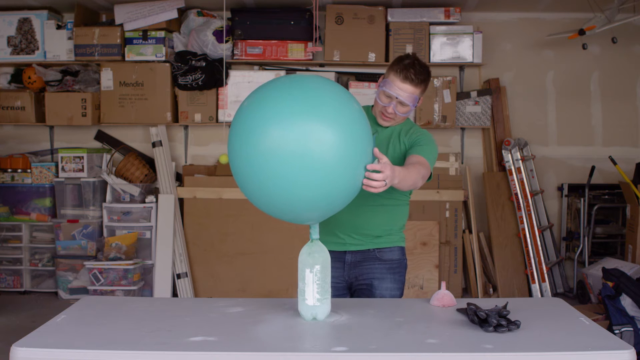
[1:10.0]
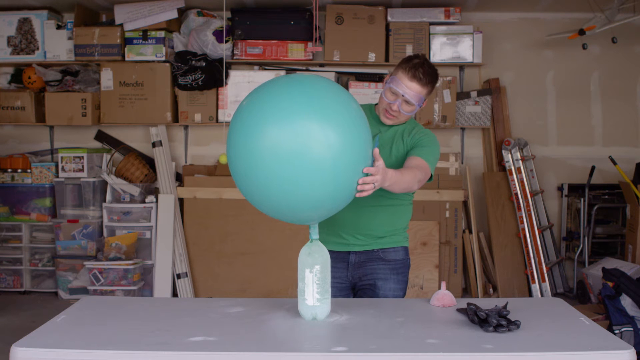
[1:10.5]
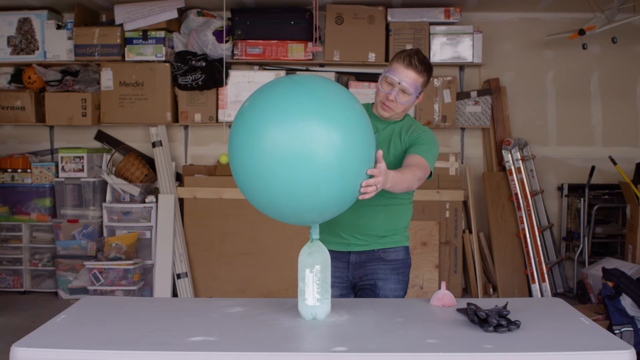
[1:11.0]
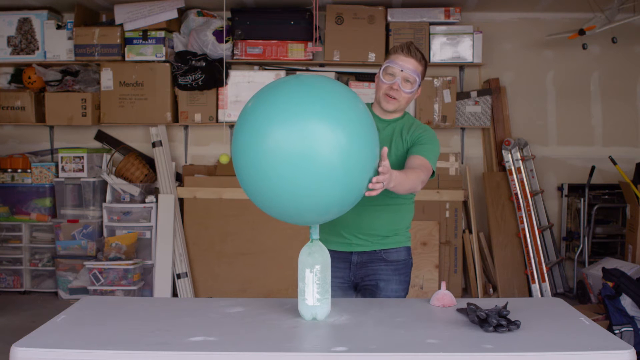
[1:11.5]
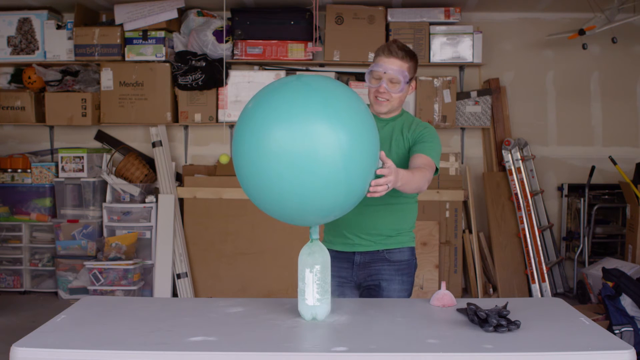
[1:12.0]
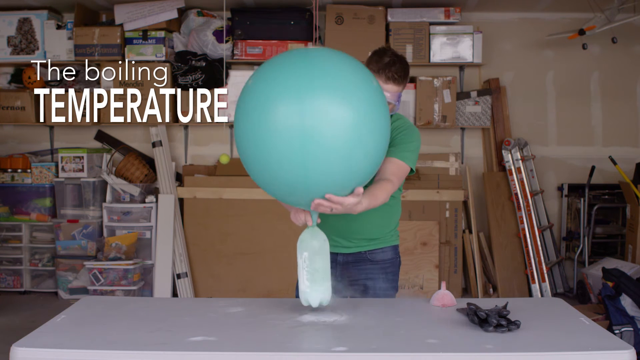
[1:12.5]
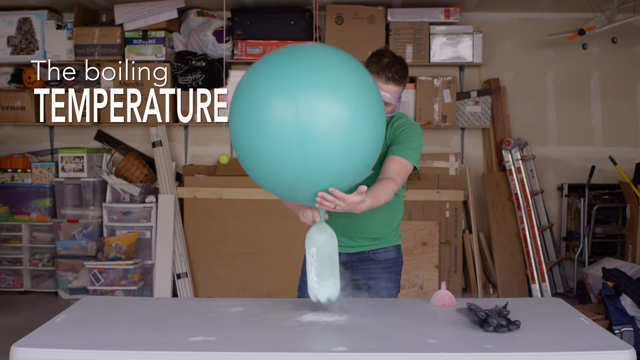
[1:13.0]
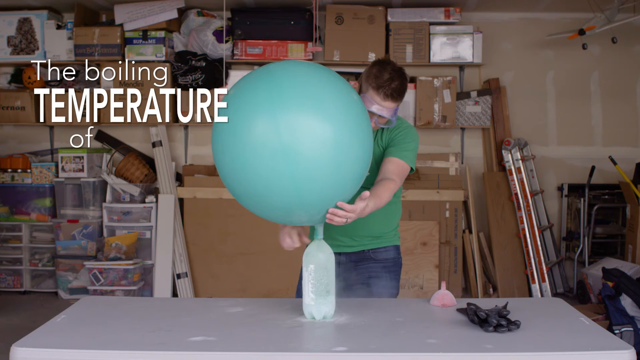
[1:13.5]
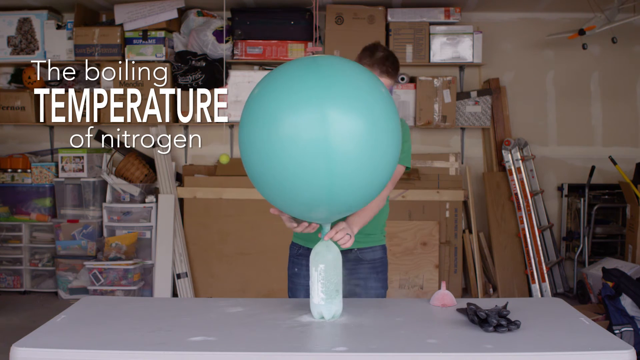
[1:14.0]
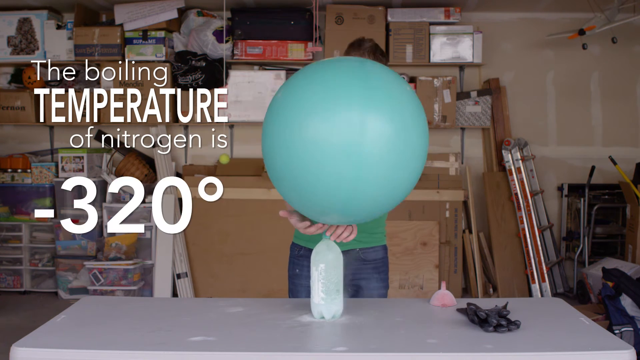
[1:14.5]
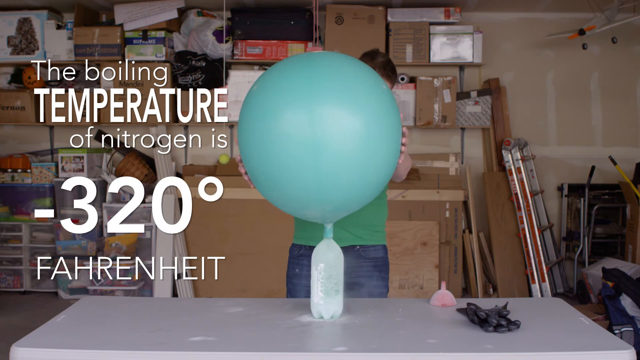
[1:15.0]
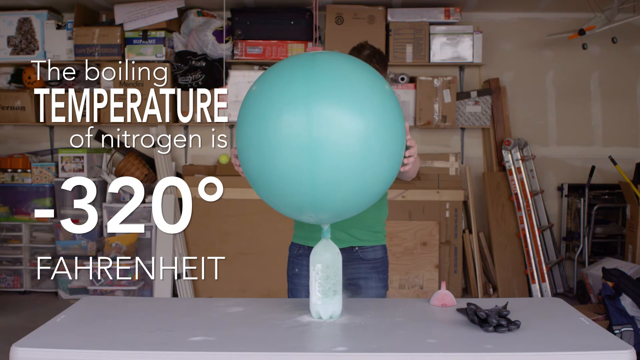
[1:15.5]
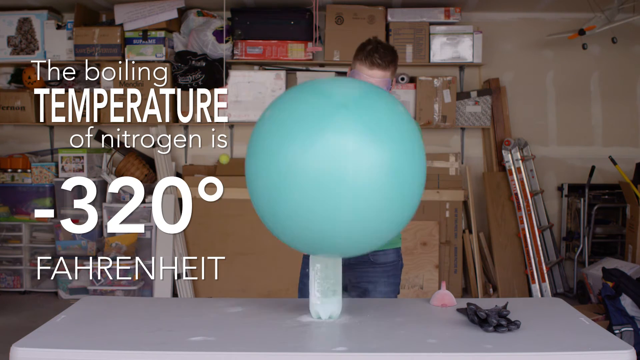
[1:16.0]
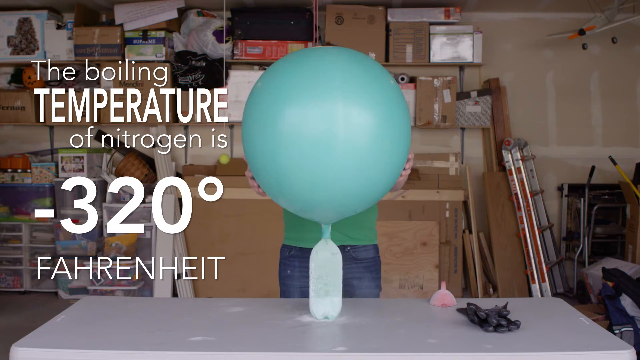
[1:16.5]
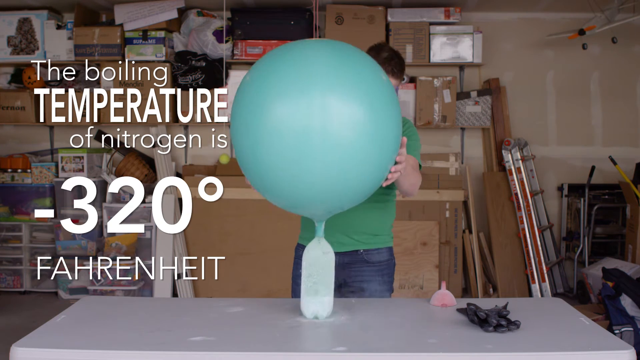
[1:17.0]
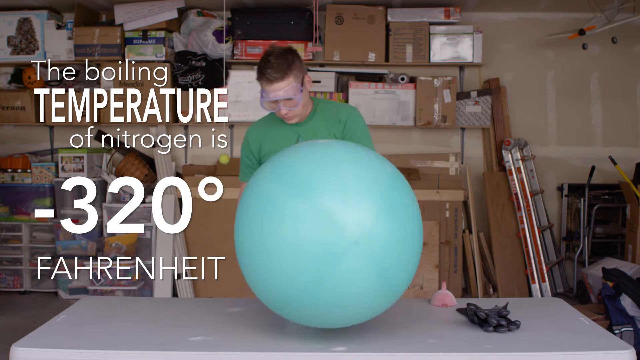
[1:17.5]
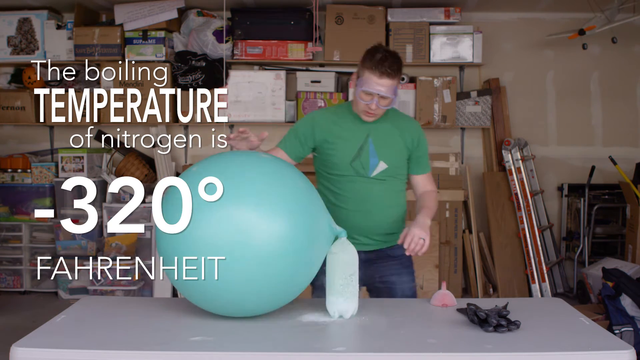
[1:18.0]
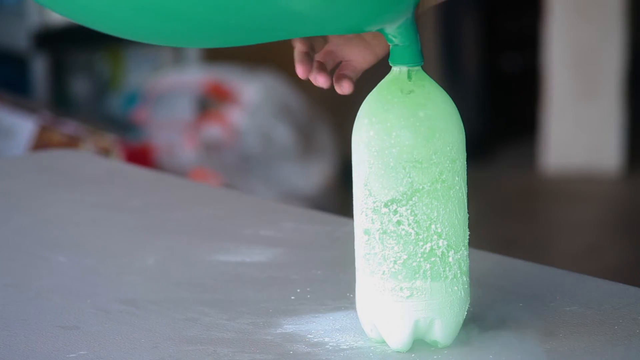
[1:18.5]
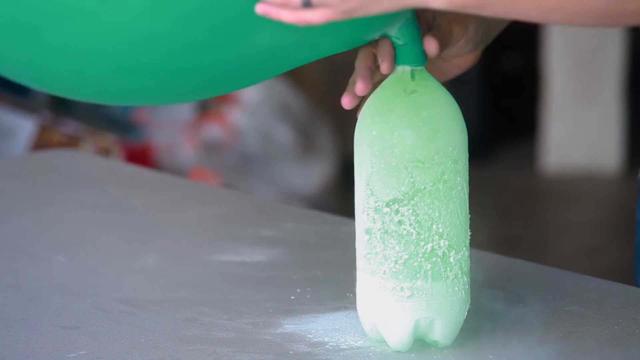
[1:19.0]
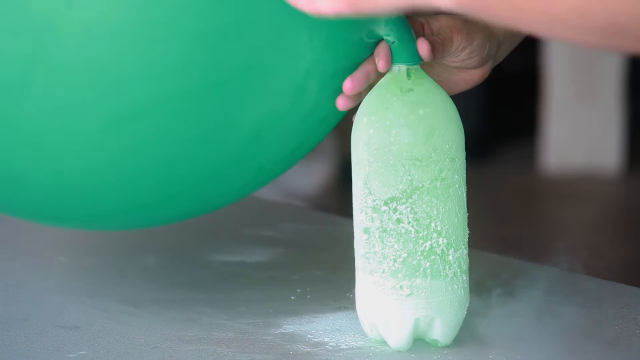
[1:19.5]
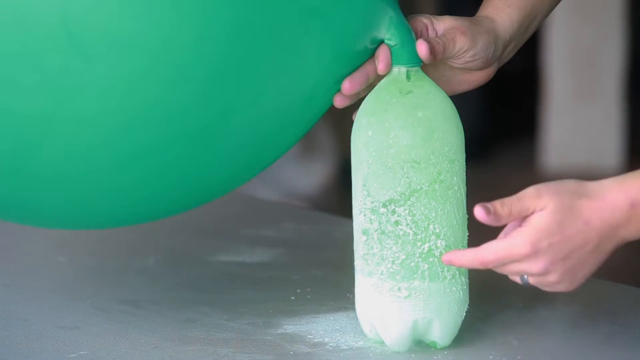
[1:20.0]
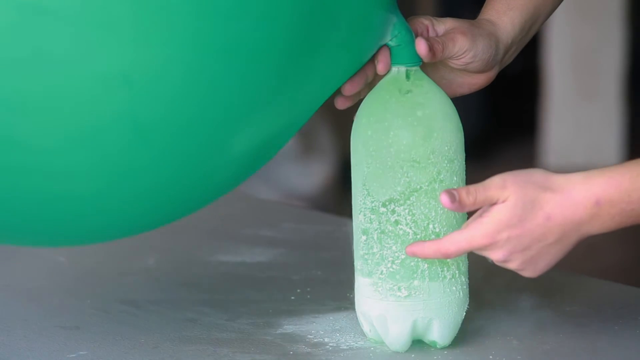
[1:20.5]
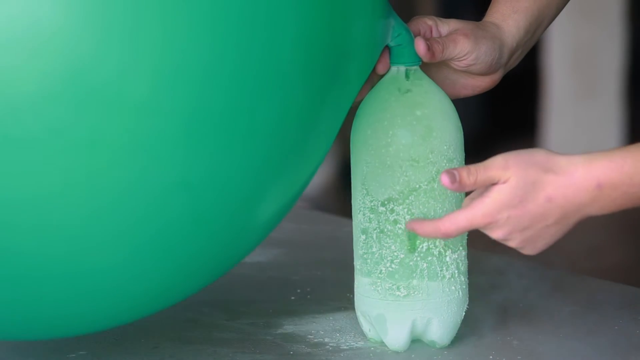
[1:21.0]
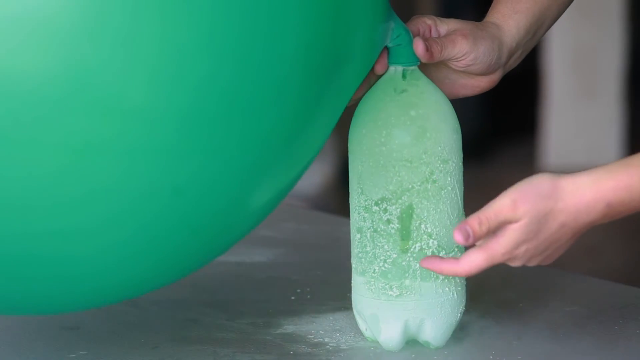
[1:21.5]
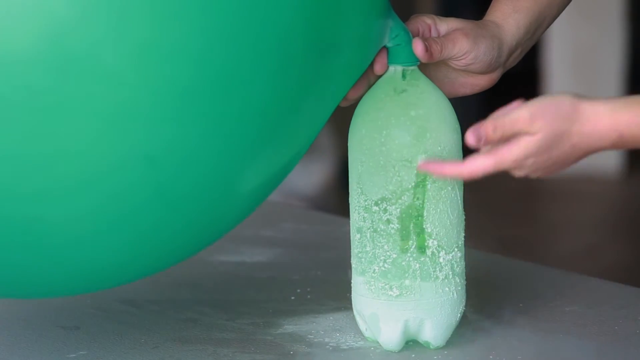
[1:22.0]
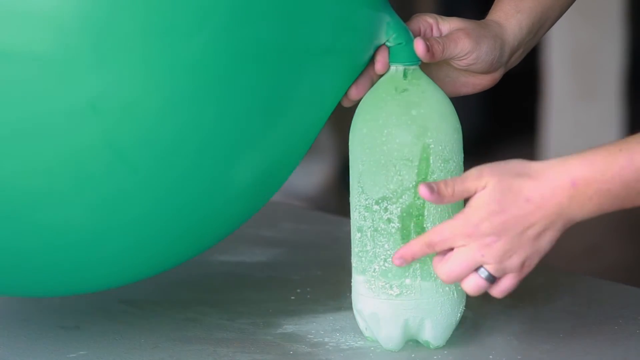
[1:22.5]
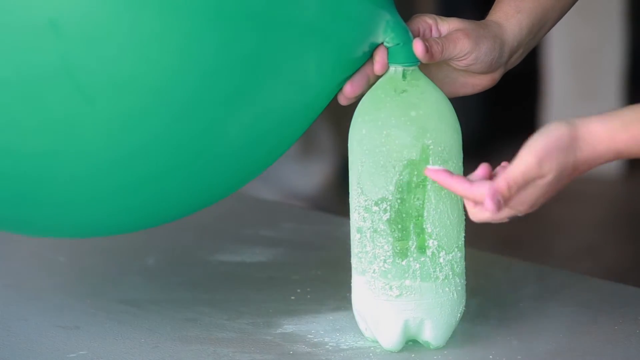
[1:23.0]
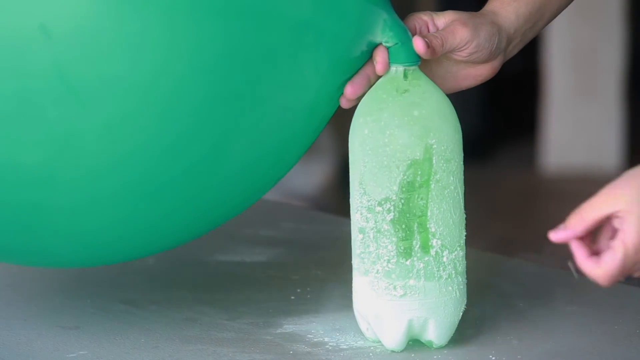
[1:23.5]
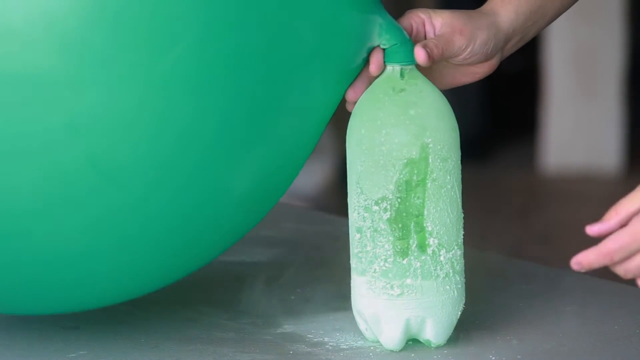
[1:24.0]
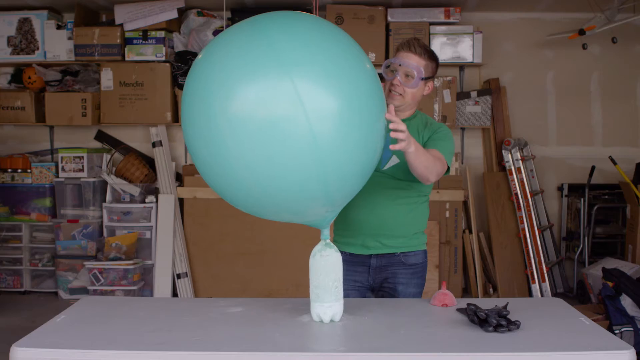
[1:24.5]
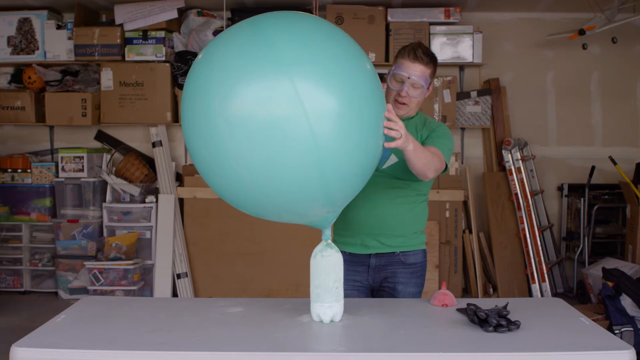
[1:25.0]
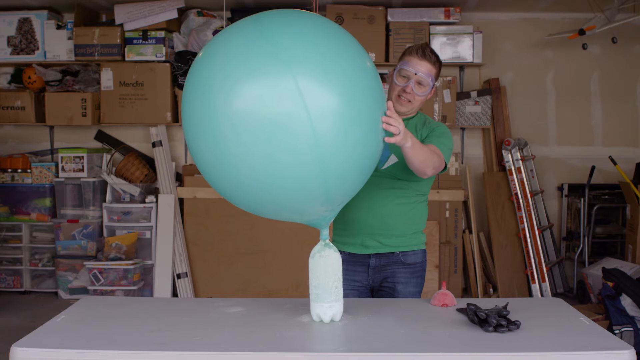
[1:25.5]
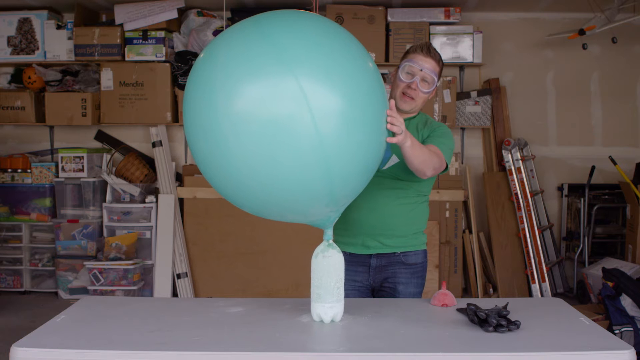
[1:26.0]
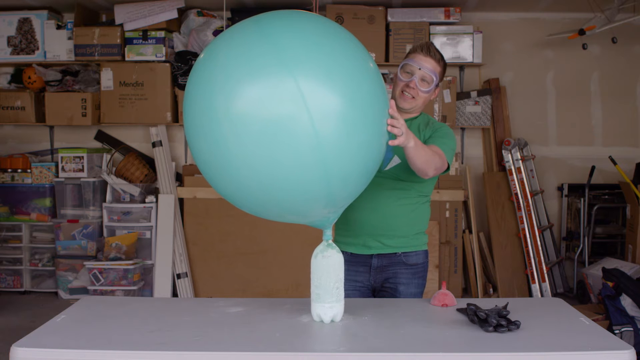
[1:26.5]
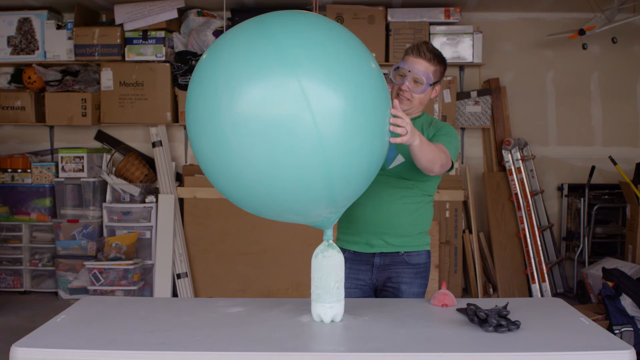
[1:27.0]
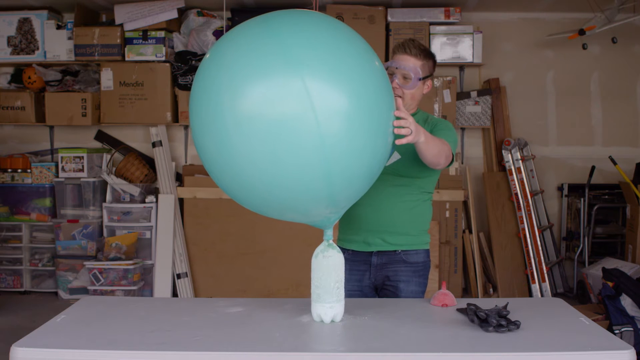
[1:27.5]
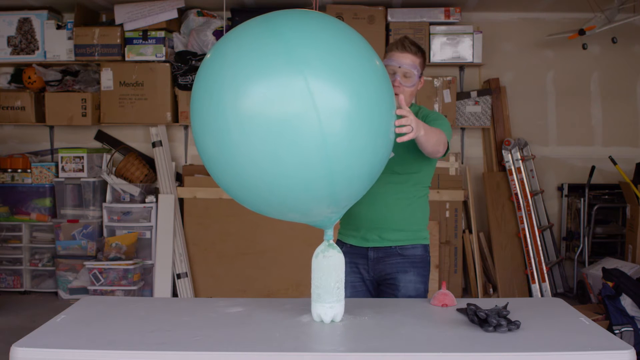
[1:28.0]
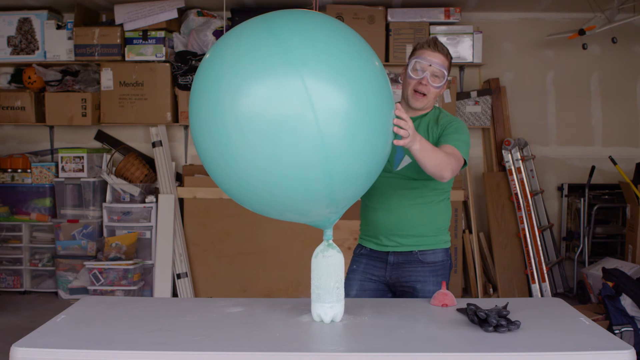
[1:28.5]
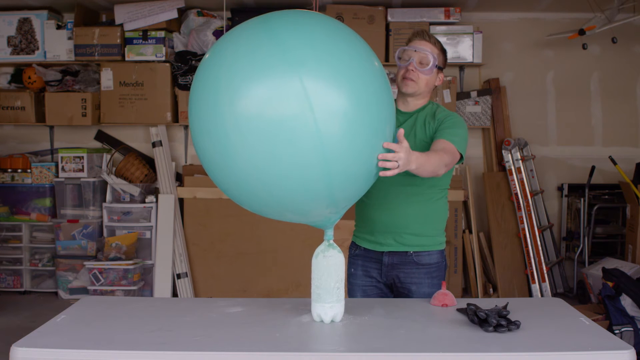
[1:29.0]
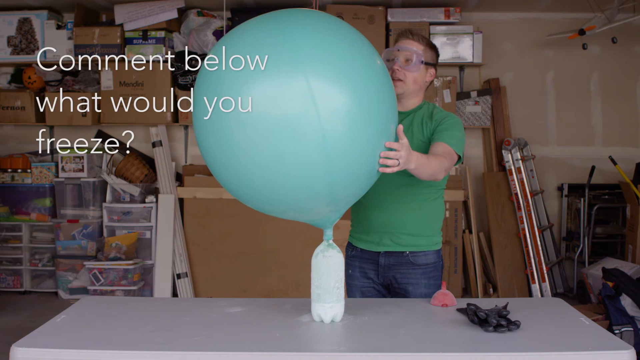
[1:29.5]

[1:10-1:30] A green balloon is being attached to the empty green bottle, and some of the nitrogen sticks to the side of the bottle. The man scrapes the side of the bottle with his index finger, and some of the material on the bottle comes off as he swipes his finger across the bottom of it. The scene is in the garage, with many cardboard boxes hanging on the wall in the background. In the upper right of the screen, an airplane with orange wings and a black tip hangs from the ceiling and moves.